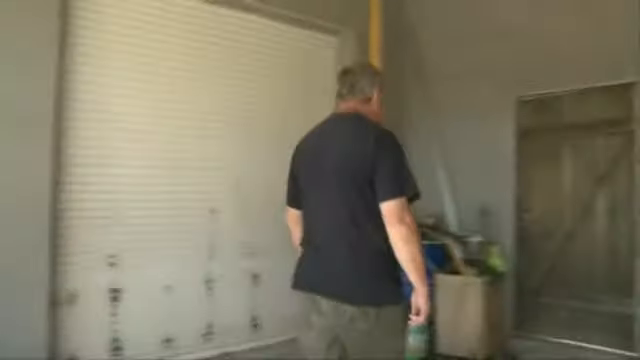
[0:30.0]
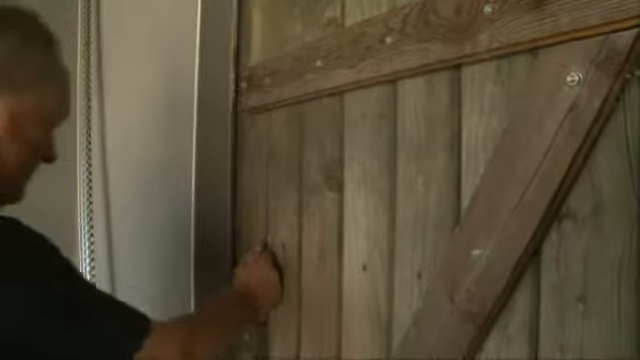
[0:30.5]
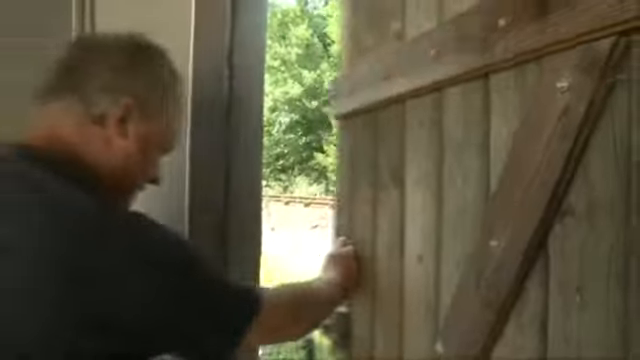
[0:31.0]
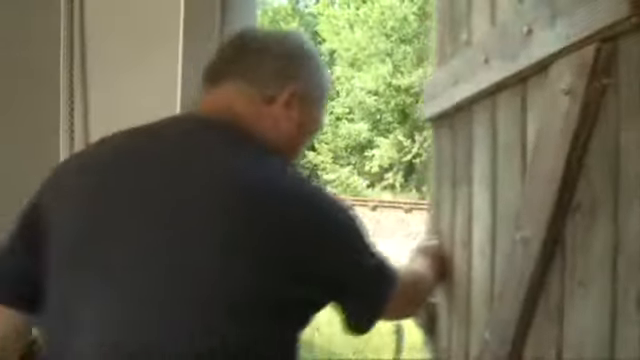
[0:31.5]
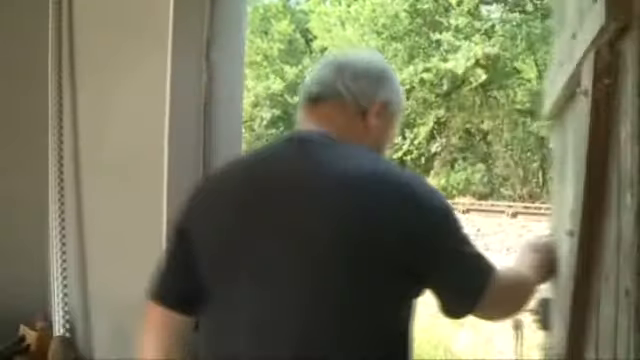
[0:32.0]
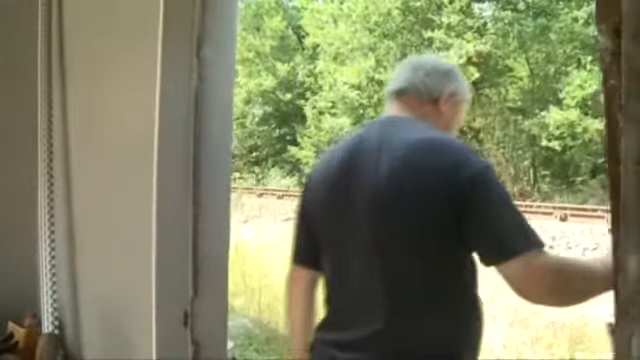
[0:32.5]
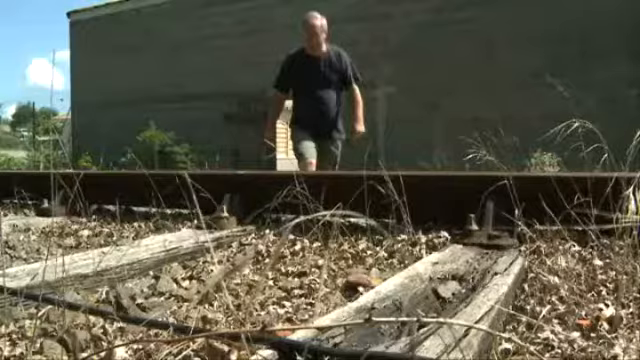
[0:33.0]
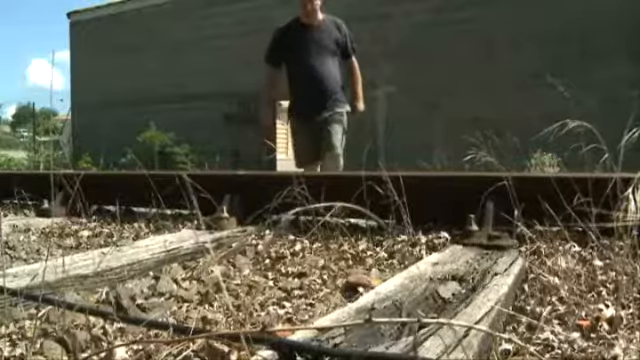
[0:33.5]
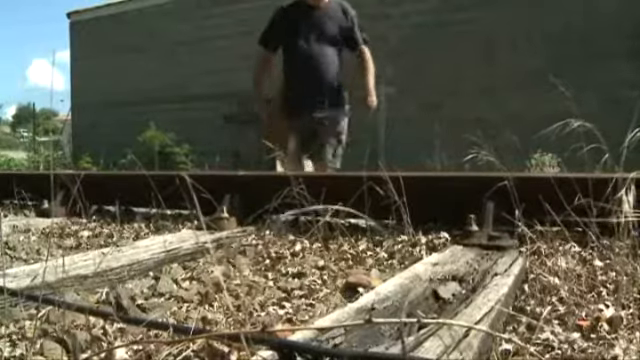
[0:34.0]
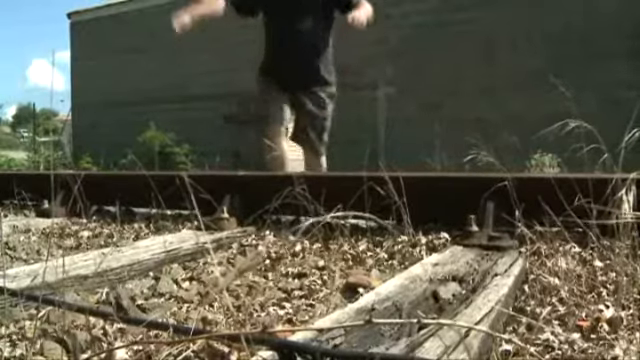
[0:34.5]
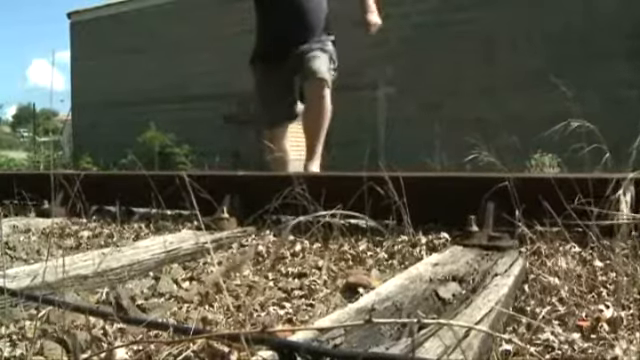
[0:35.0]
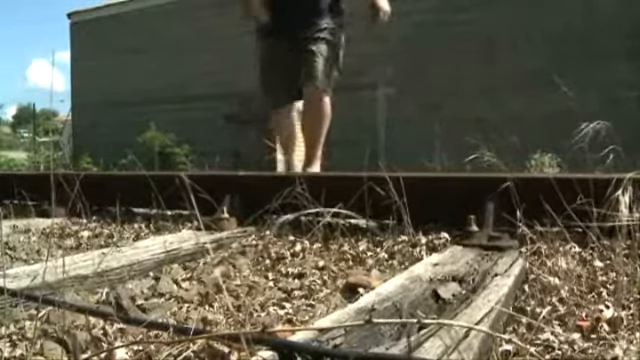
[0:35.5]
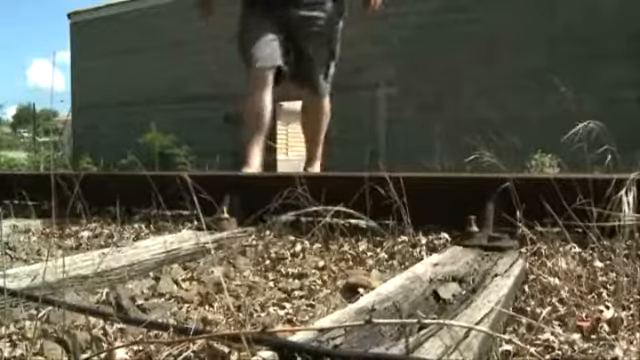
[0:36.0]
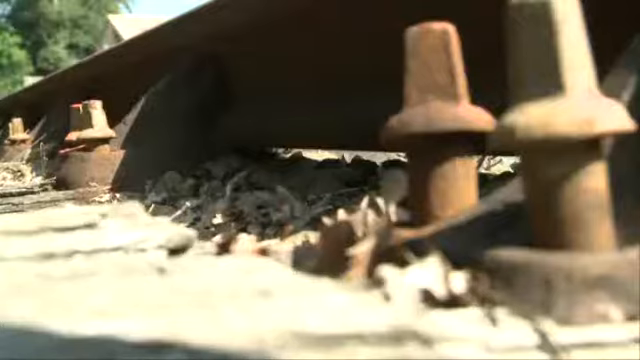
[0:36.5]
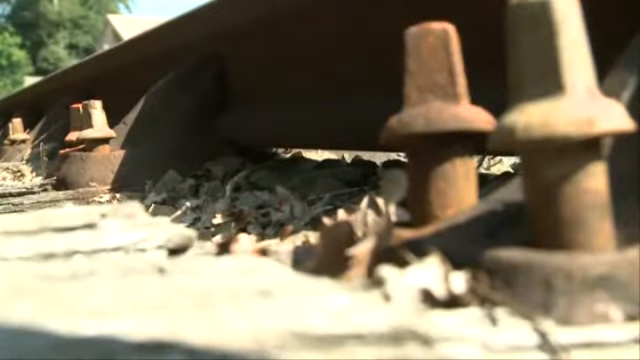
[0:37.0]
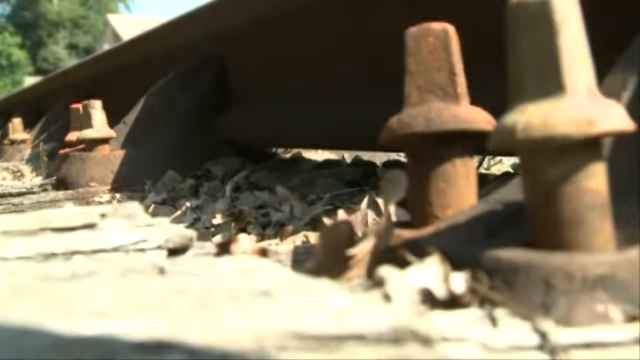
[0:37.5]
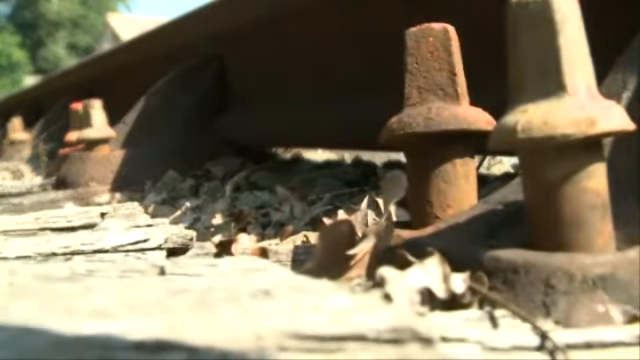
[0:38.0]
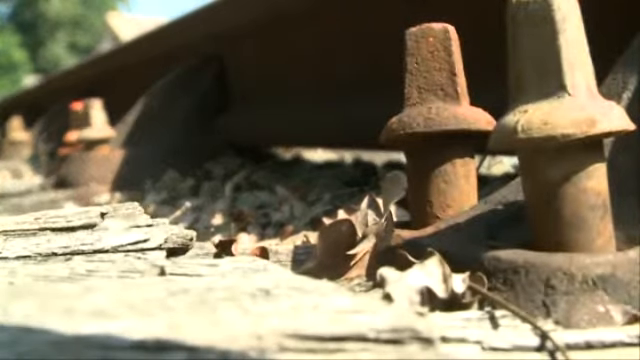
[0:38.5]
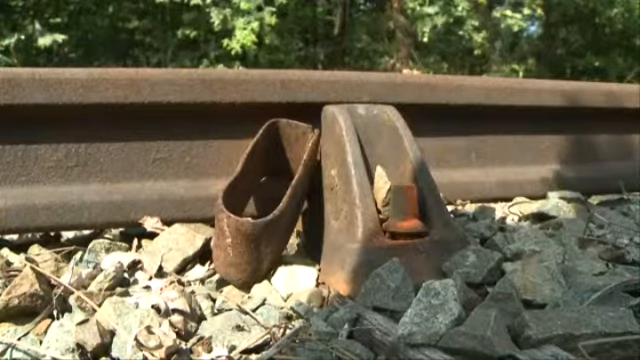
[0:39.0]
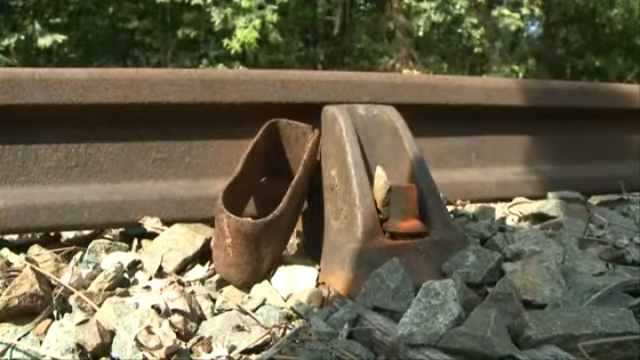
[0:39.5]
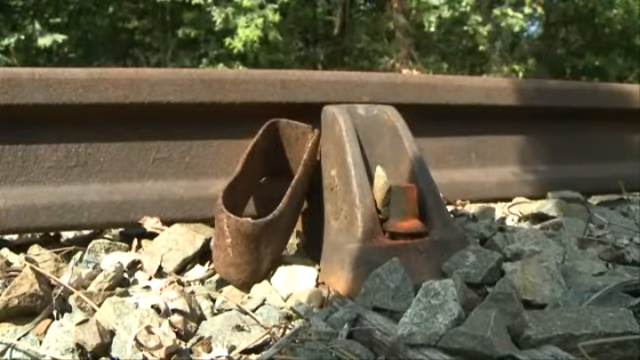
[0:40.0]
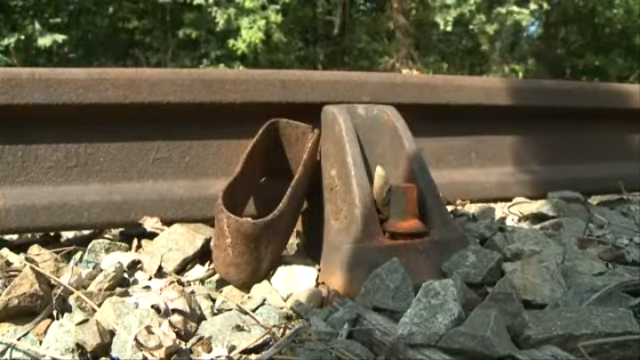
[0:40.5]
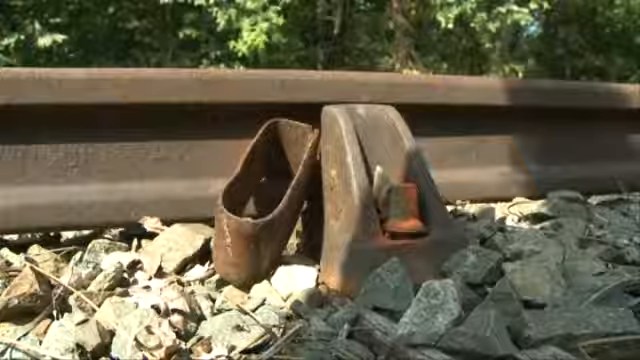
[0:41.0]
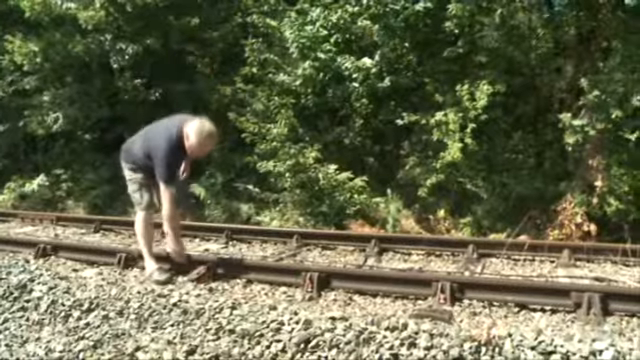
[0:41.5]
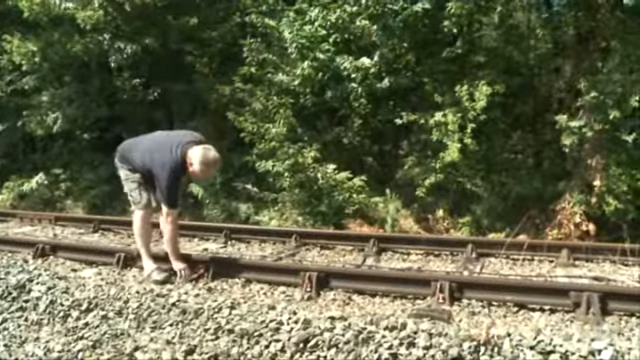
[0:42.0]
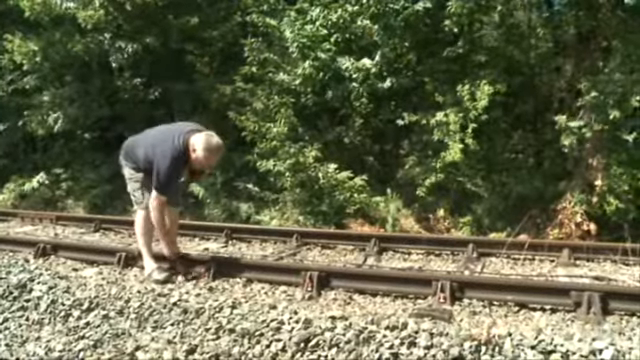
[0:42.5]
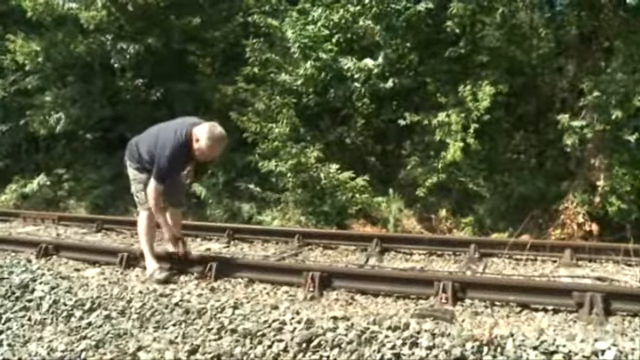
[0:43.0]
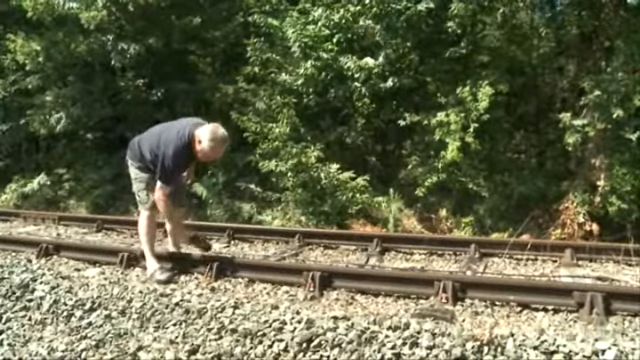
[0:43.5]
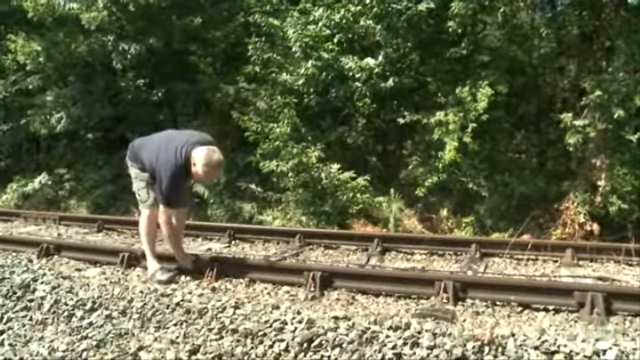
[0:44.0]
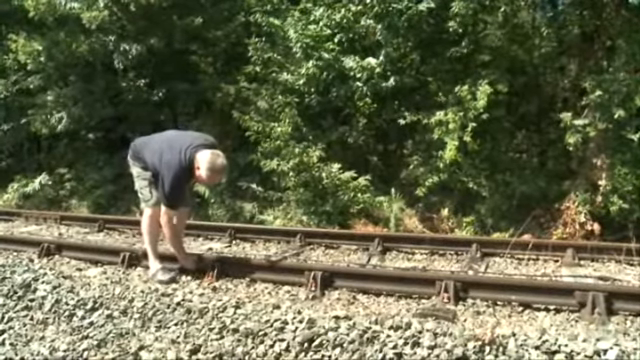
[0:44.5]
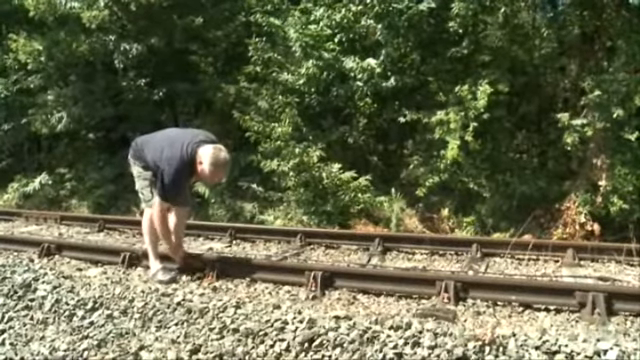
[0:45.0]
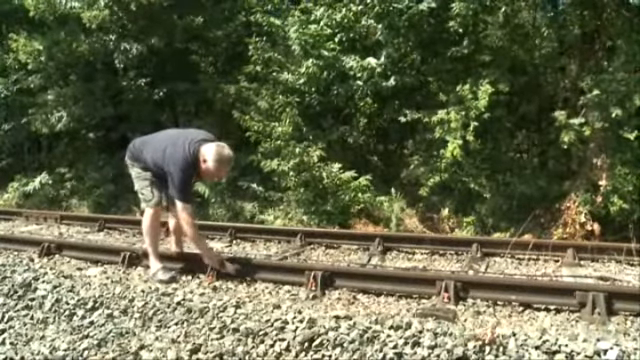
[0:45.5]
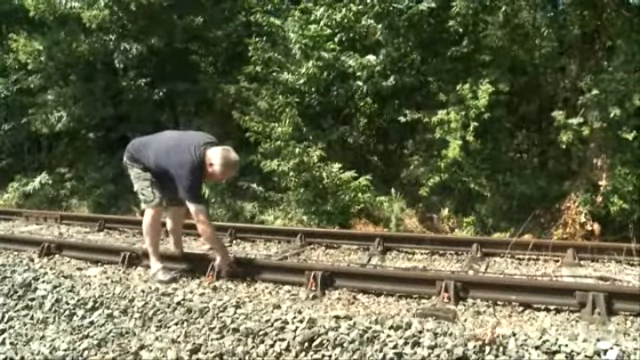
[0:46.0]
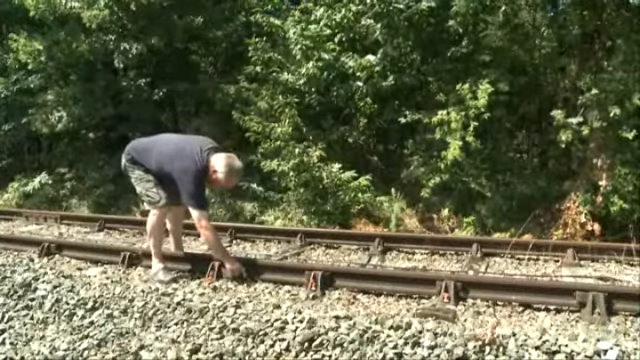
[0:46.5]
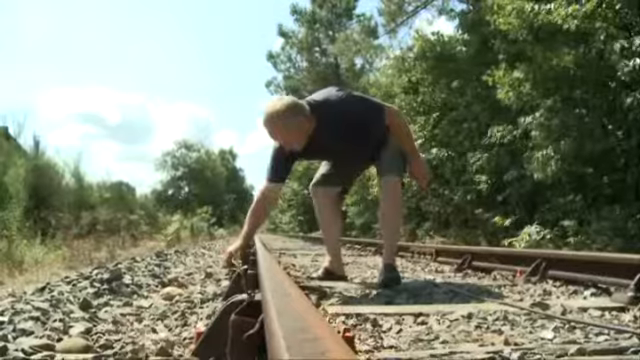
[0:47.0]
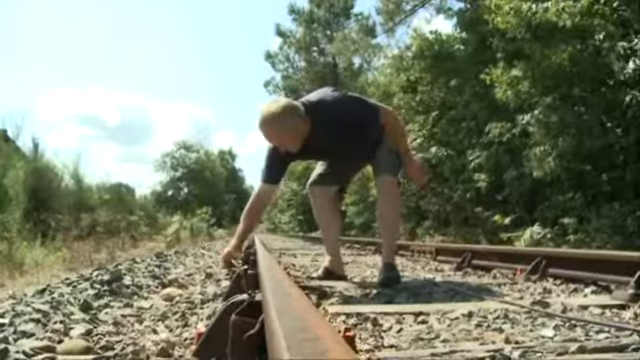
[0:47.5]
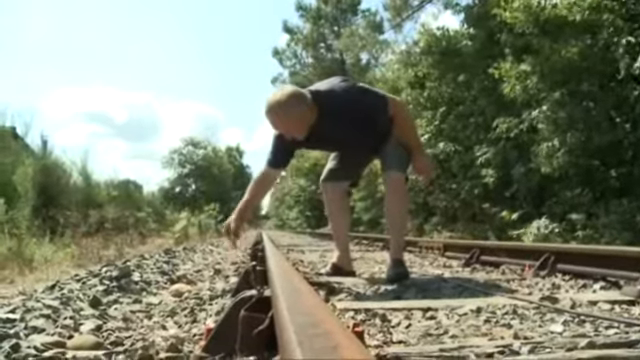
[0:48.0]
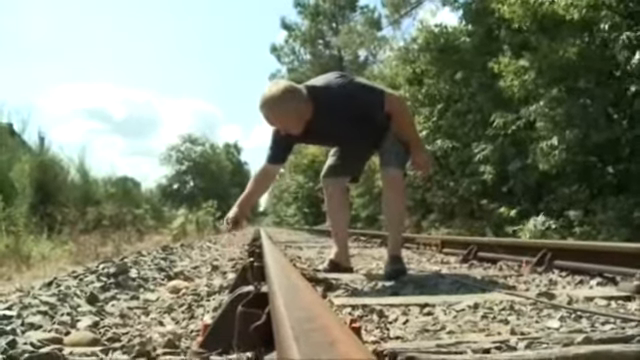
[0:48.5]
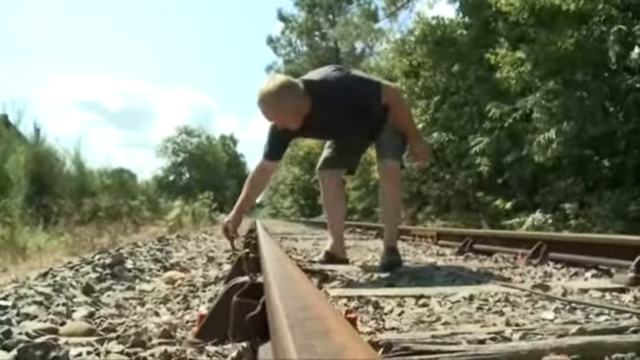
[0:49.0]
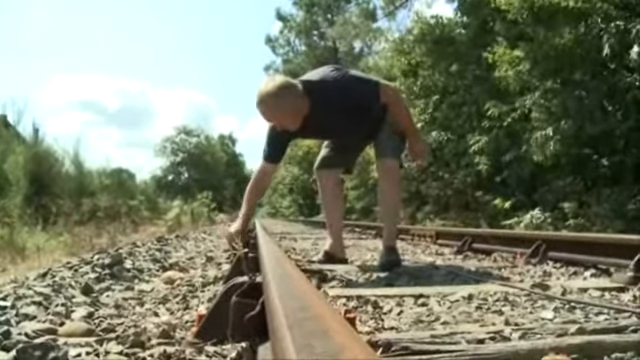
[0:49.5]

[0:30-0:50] The man walks through the garage and opens the wooden single barn-door-style door, which leads out behind the garage; the garage backs up to a brushy area next to the railroad track. The man, in a faded black shirt and green shorts and seemingly in his mid to late 60s, walks toward the railroad track, showing how close it is to his house. The camera pans in on loose screws and pieces that are not held down on the track. The man picks up the pieces and fixes them or sets them next to the track. He easily pulls screws out of the track and picks them up. There is uncut grass around the track, with rocks and leaves at the back of the track. On the other side of the housing there is a green brush or forest line.